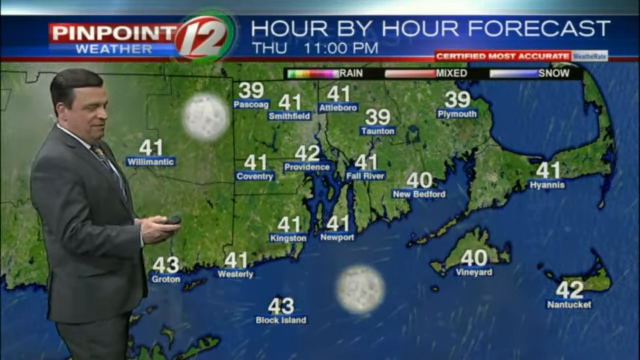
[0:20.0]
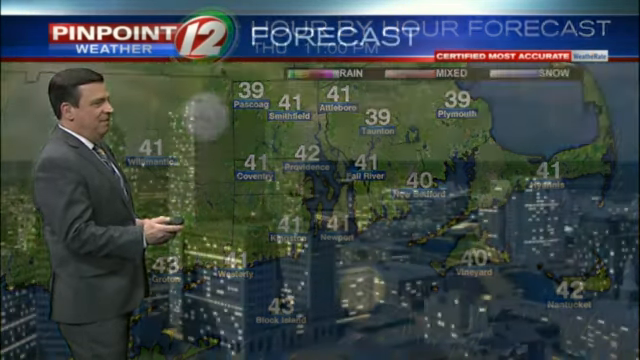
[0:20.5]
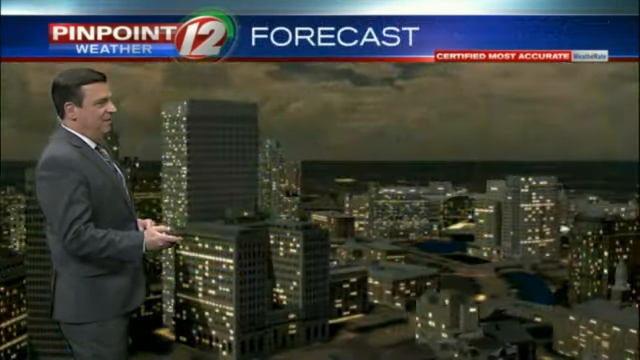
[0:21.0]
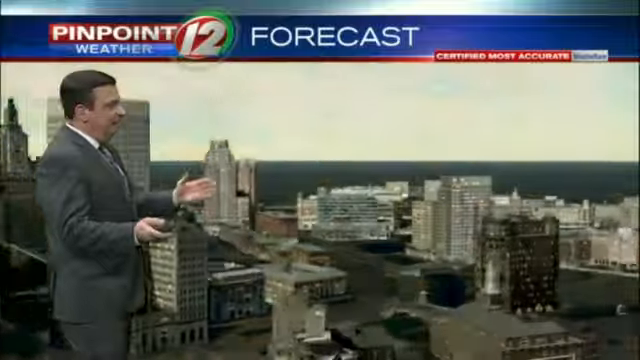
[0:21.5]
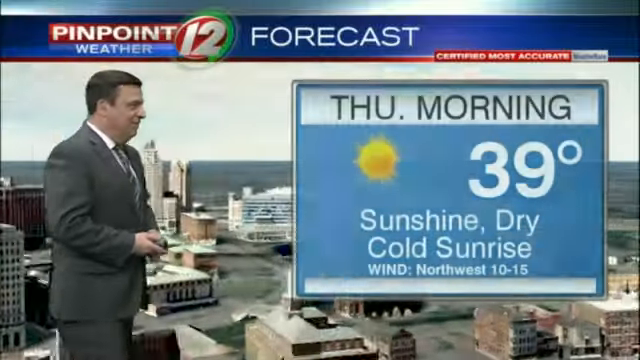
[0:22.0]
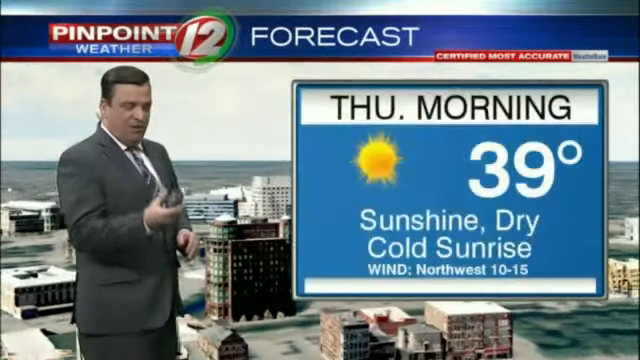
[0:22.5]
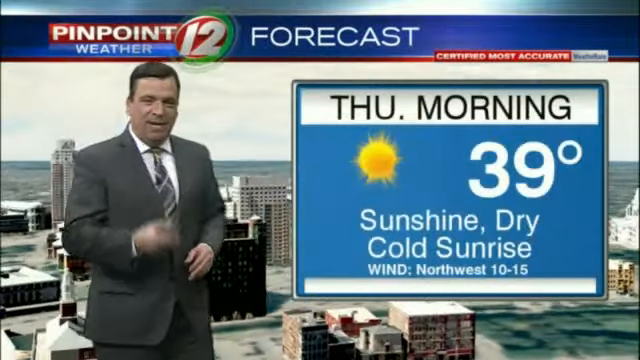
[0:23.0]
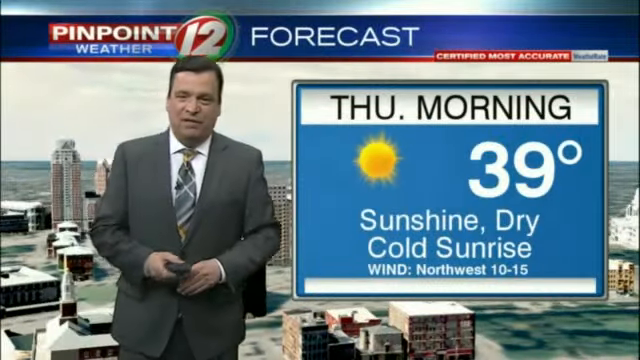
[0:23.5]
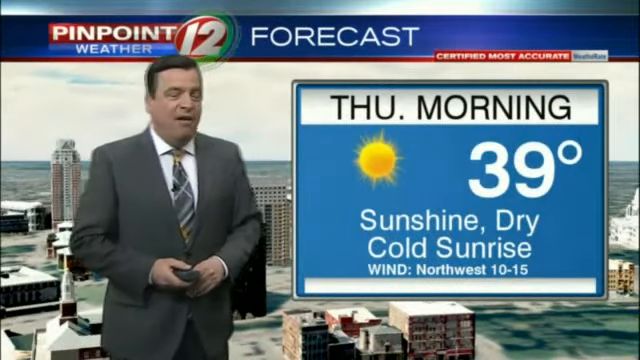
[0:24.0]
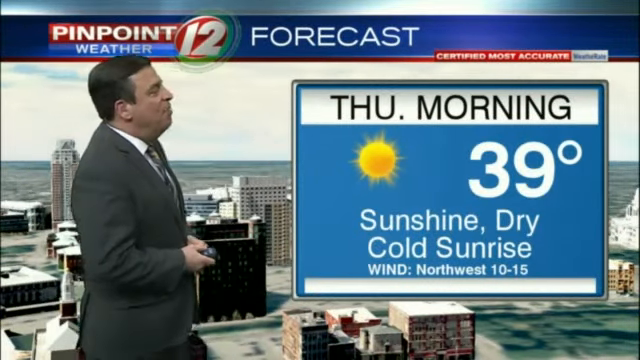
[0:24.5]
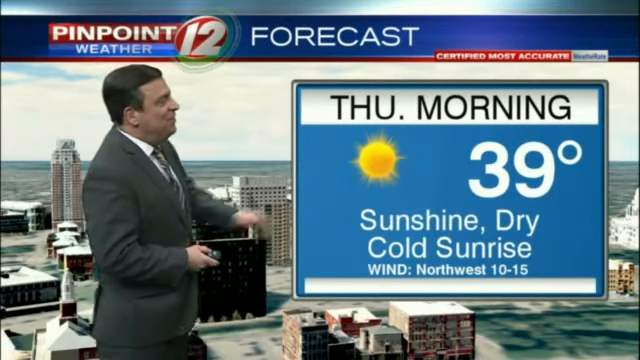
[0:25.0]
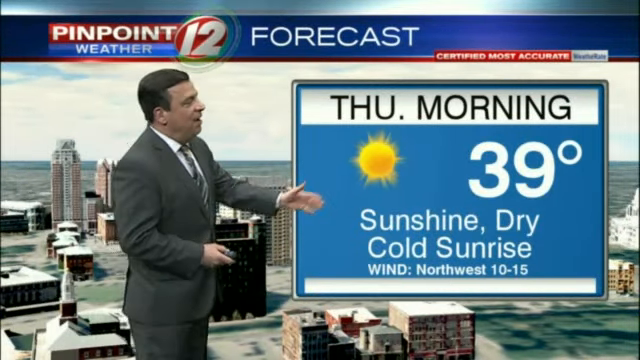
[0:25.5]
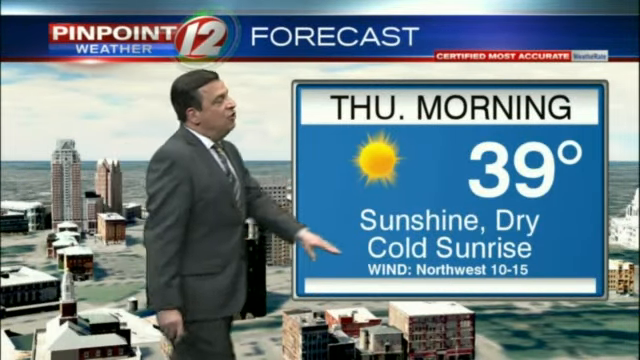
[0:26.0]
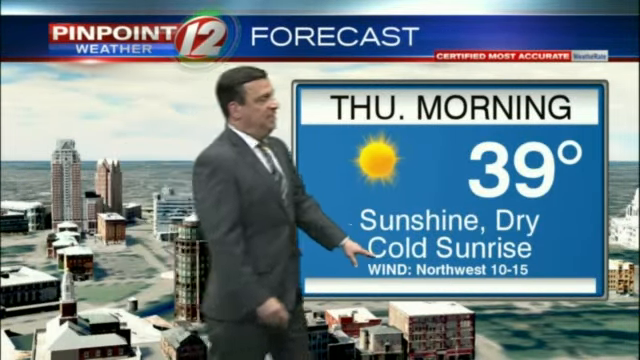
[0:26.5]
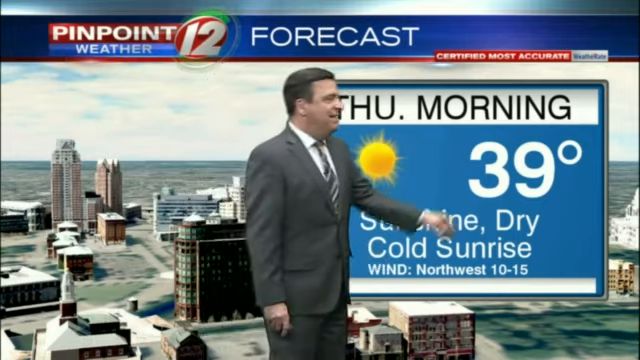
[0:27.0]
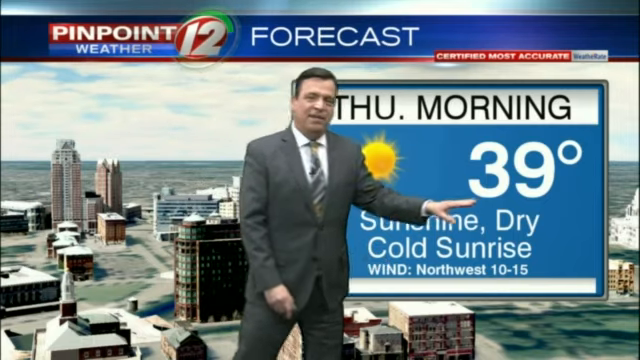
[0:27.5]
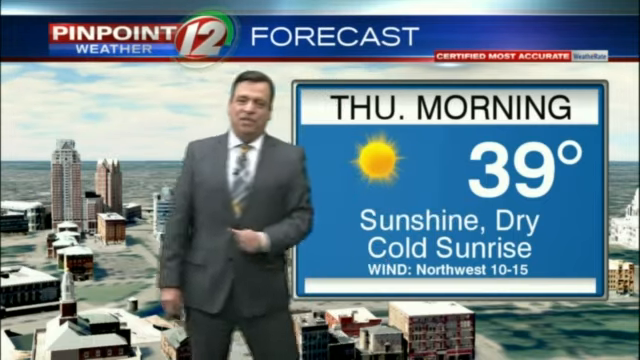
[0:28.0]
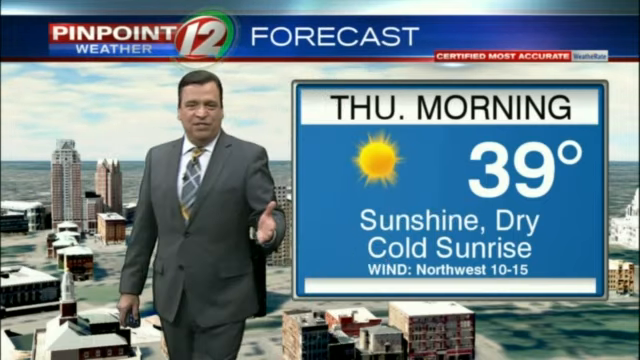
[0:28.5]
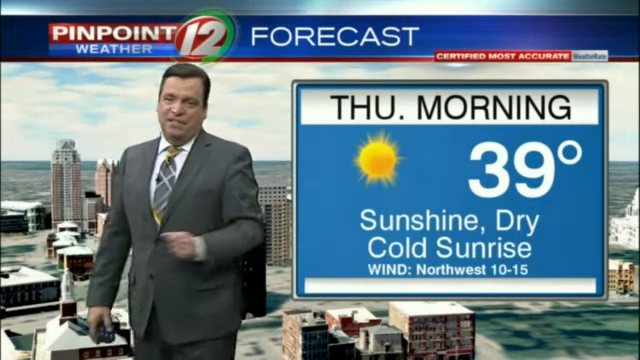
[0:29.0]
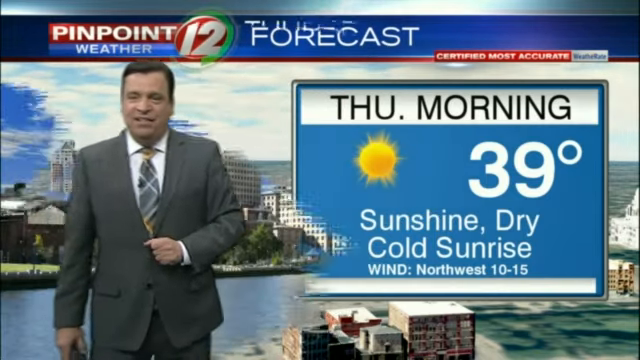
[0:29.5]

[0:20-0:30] The map is shown, and he turns to it as it changes to a city skyline. The city is lit up and it is dark, and then it becomes morning. On screen, a blue square with white text reads "Thursday morning" and shows a temperature of 39 degrees, with sunshine, dry, cold, sunrise, and wind from the northeast at 10 to 15 miles an hour. A yellow sun is also in the picture. He points toward it and gestures, pointing to the temperature and the description of the weather. Another skyline appears, this time in daytime, with water in the background on a sunny day.